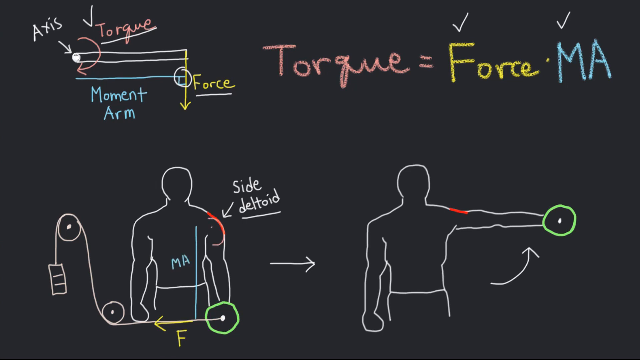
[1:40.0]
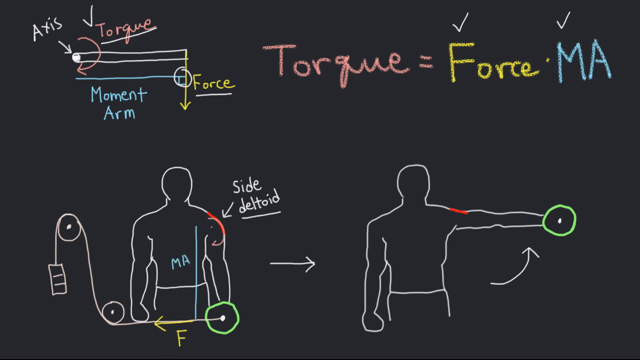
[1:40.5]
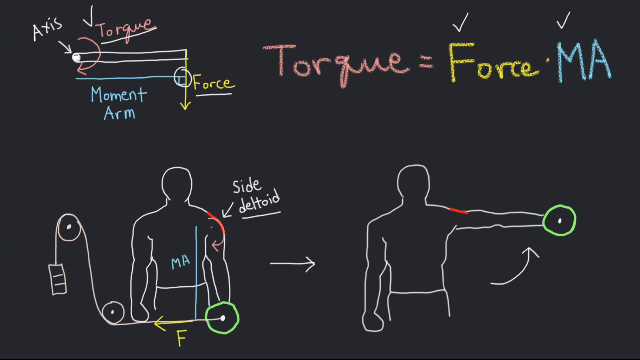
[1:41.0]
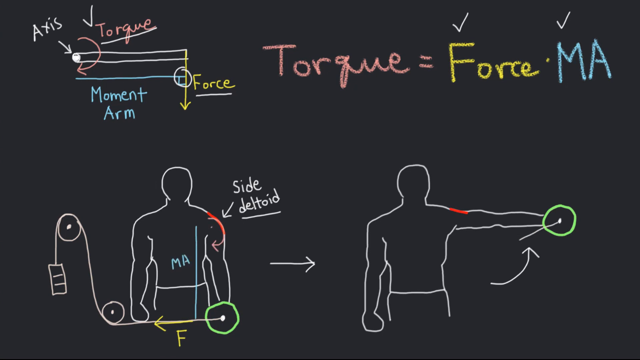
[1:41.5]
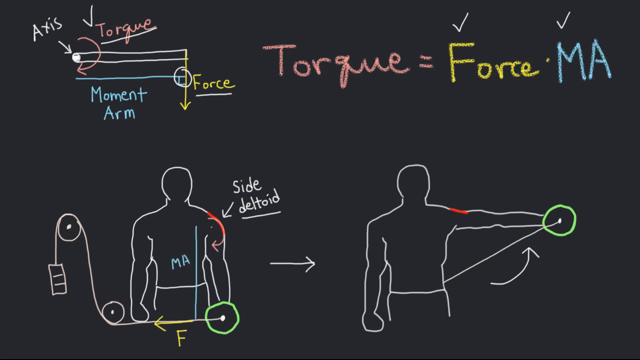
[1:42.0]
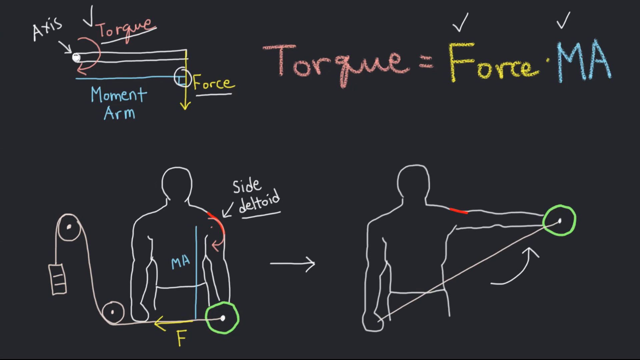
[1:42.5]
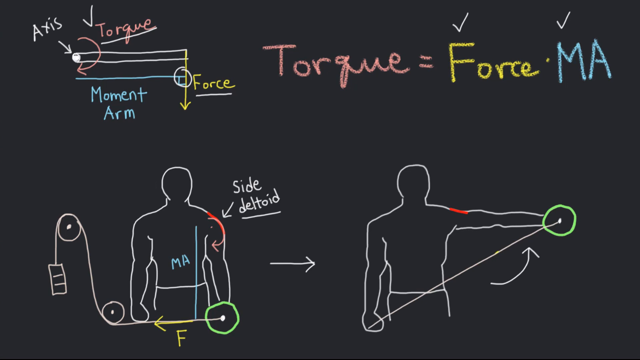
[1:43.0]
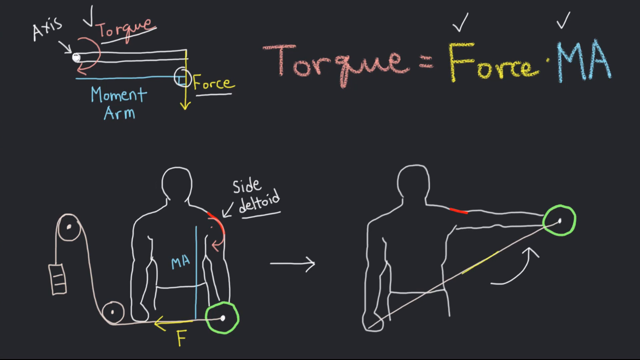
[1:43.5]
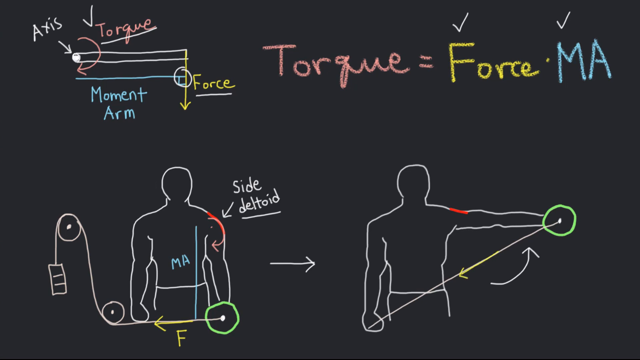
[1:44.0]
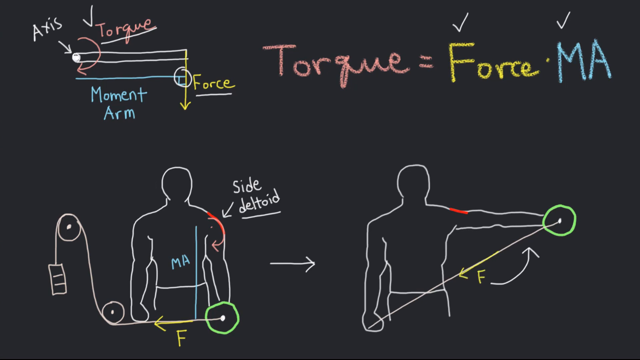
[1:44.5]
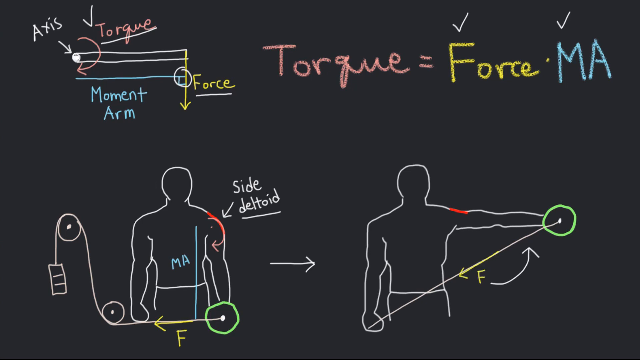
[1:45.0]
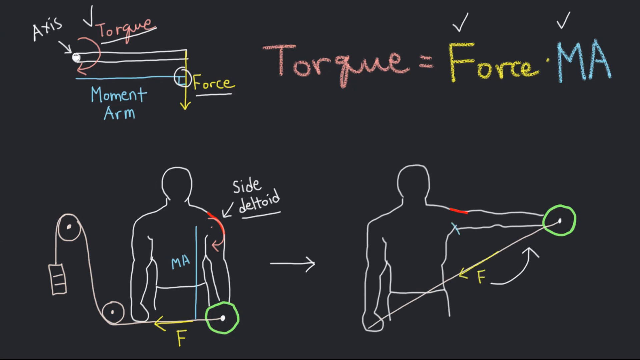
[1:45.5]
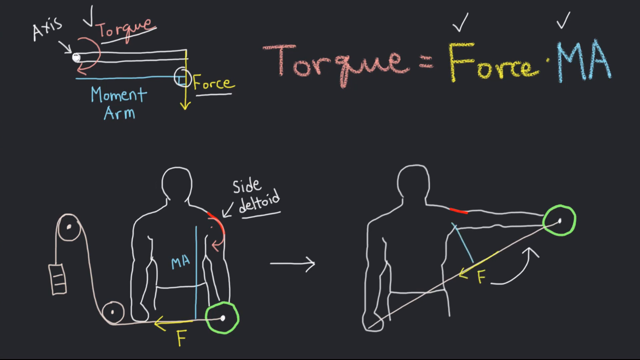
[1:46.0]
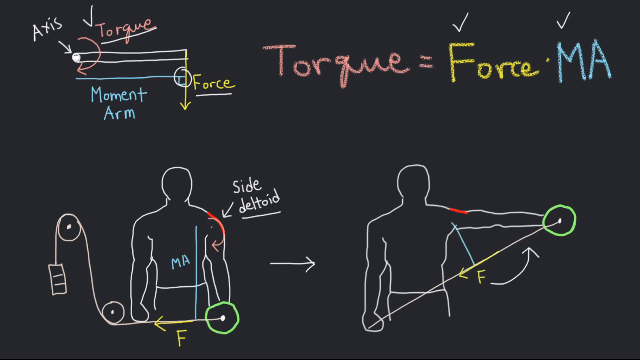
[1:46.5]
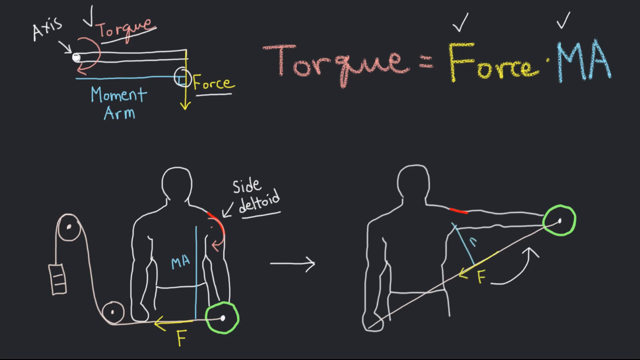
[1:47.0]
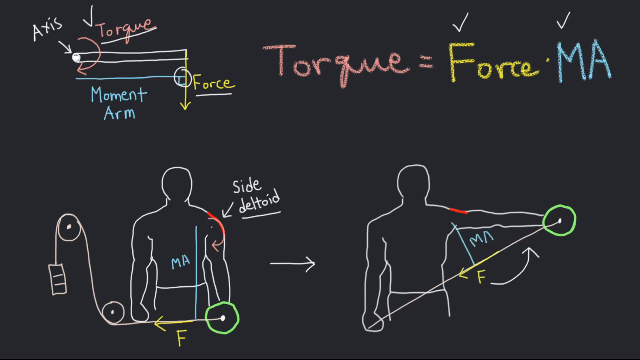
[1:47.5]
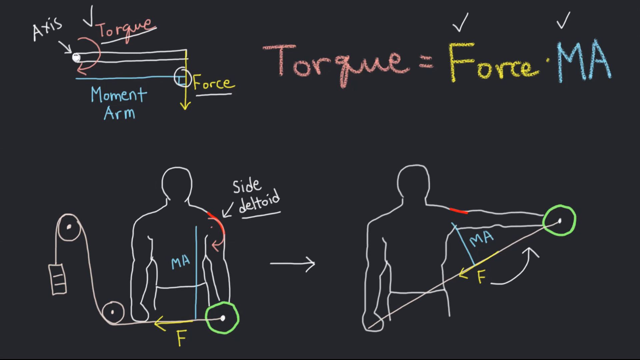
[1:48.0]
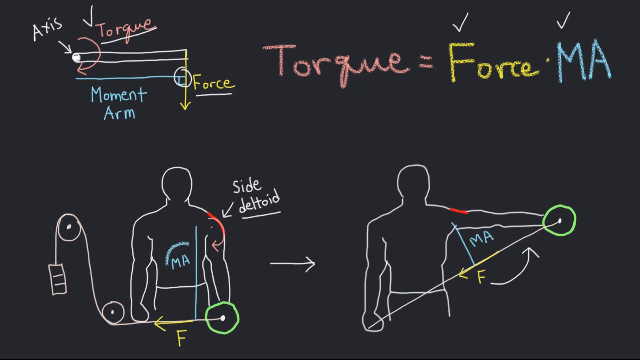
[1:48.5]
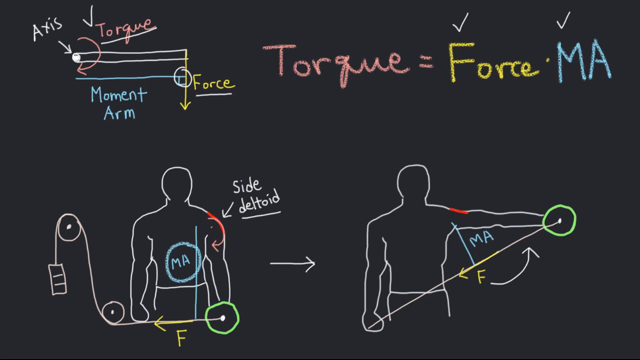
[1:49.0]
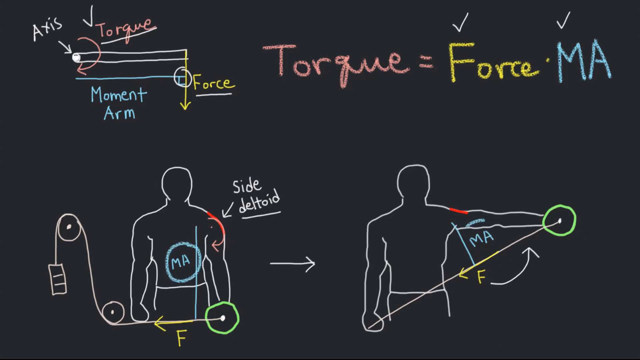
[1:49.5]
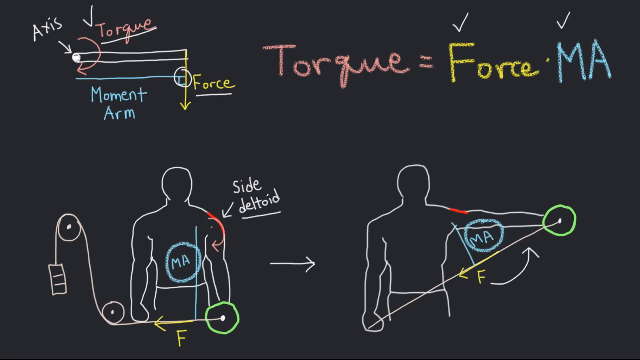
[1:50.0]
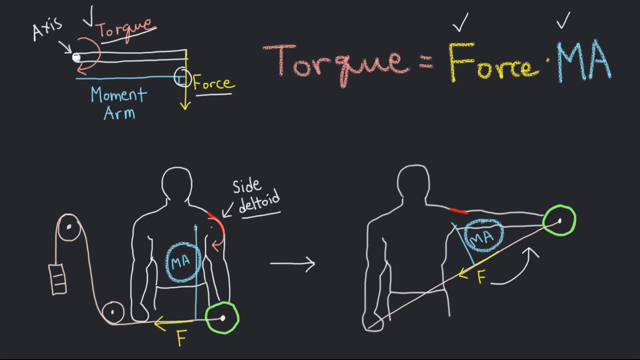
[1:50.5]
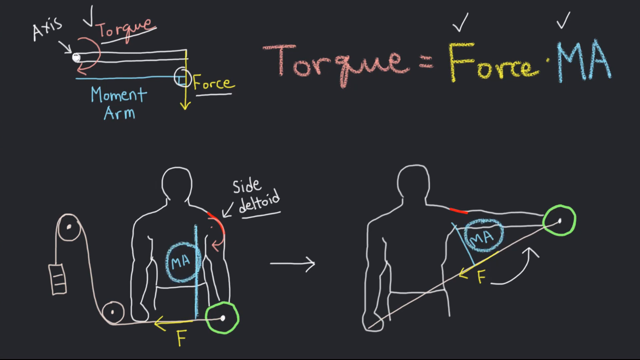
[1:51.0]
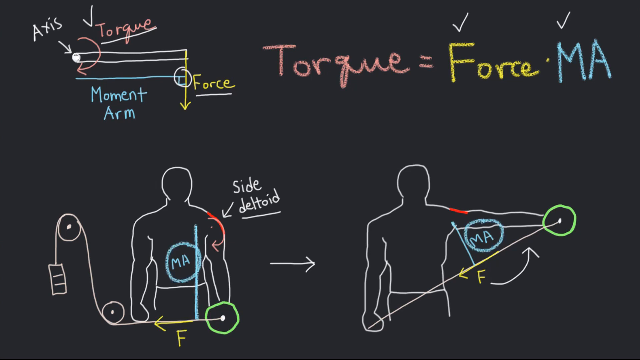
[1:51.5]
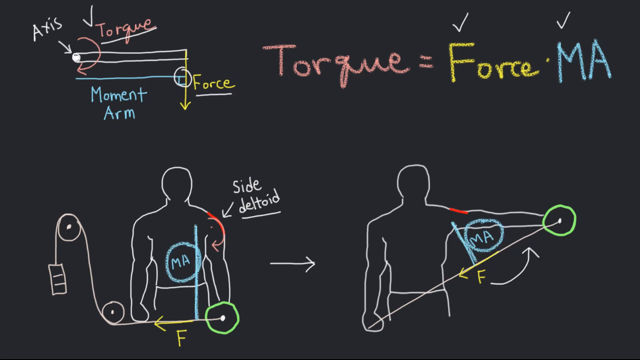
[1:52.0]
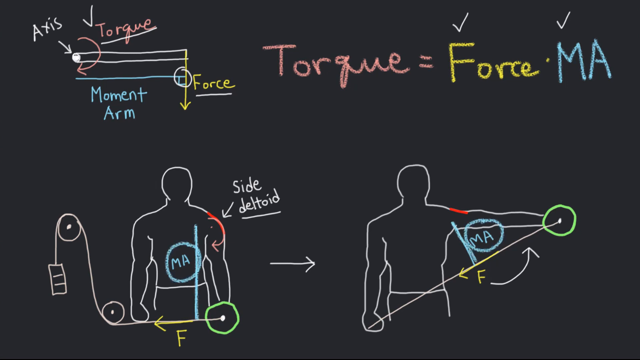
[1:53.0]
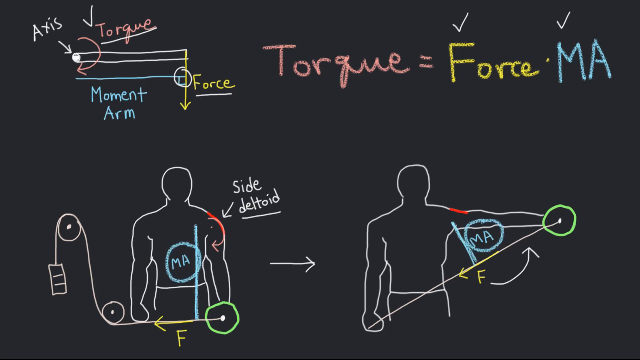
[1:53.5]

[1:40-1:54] A motion arrow is drawn toward the side deltoid. The right-hand figure is updated: a diagonal angle is drawn down from his left hand across his body with a yellow arrow and an F, and a blue line perpendicular to the diagonal line is drawn, with the letters M-A written and circled. The same is done over the torso of the figure on the left, with M-A written on his torso and circled. Most additions are on the figure on the right, apparently indicating some forceful movement across his body.